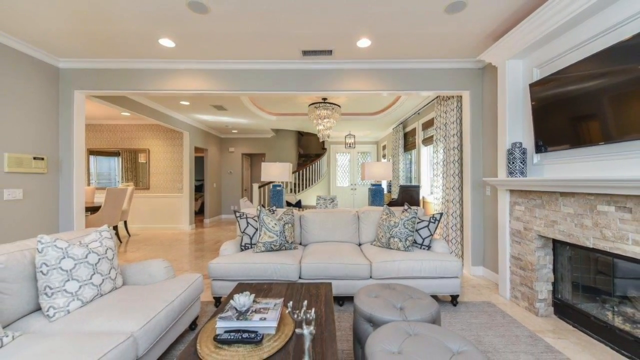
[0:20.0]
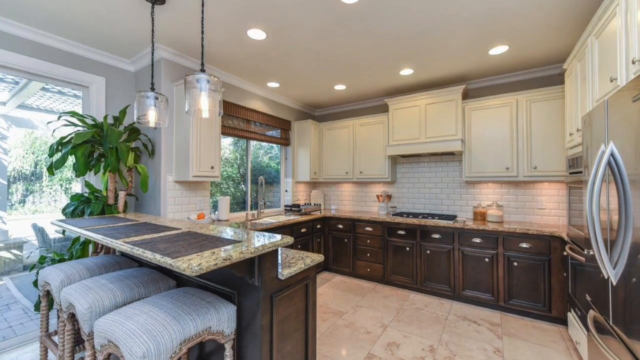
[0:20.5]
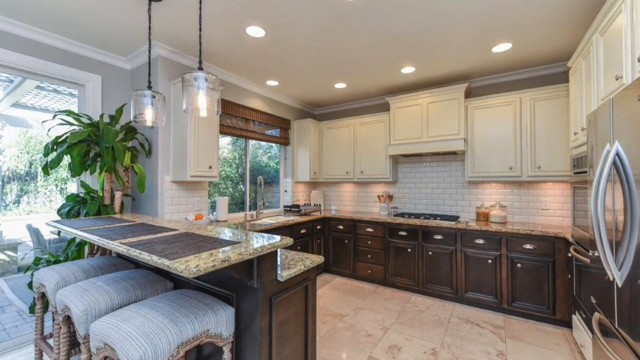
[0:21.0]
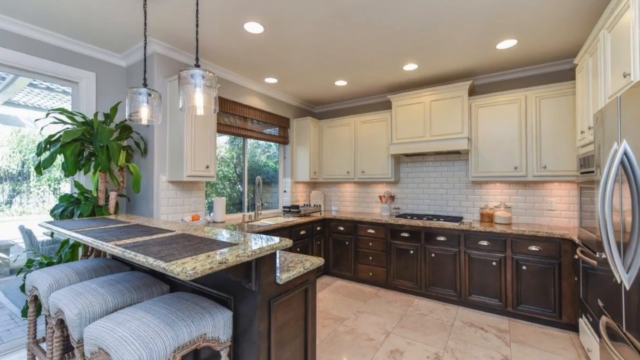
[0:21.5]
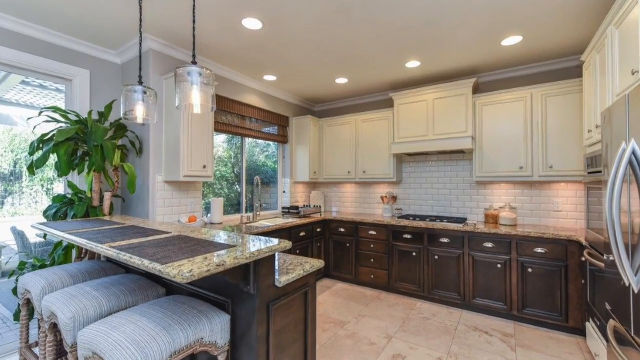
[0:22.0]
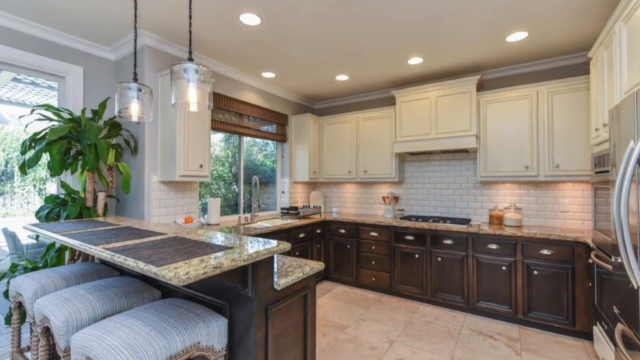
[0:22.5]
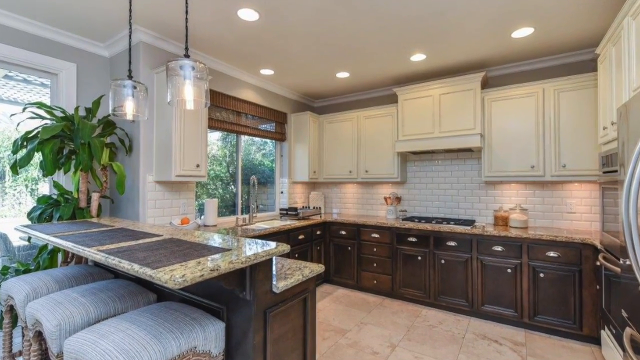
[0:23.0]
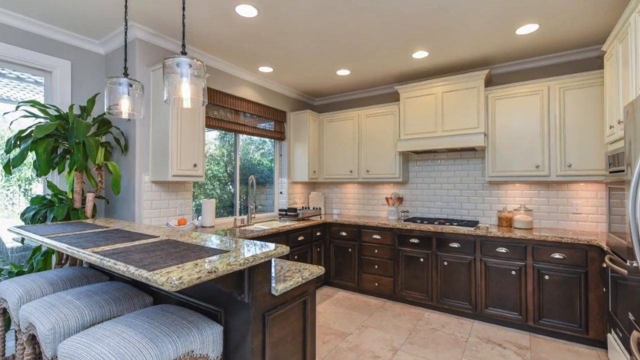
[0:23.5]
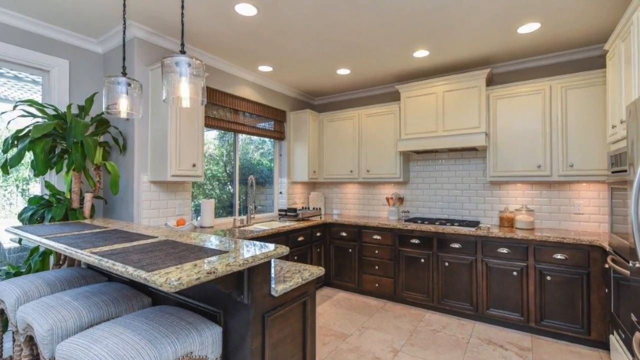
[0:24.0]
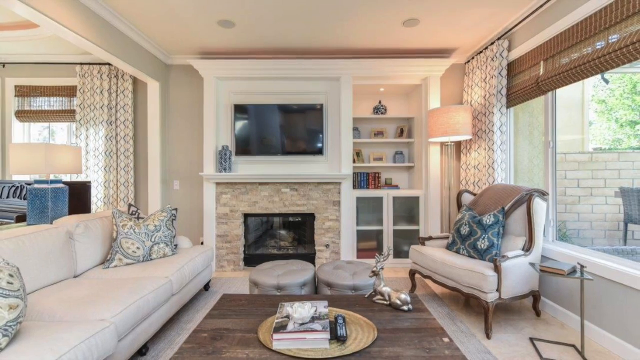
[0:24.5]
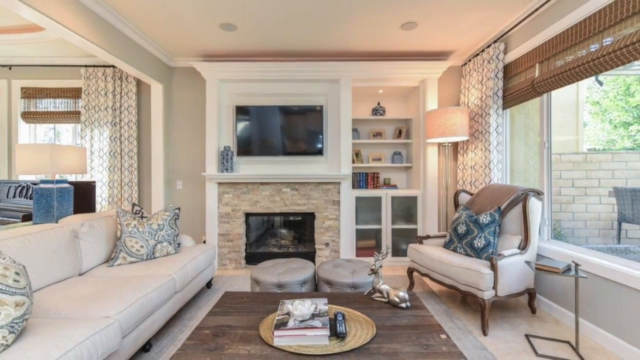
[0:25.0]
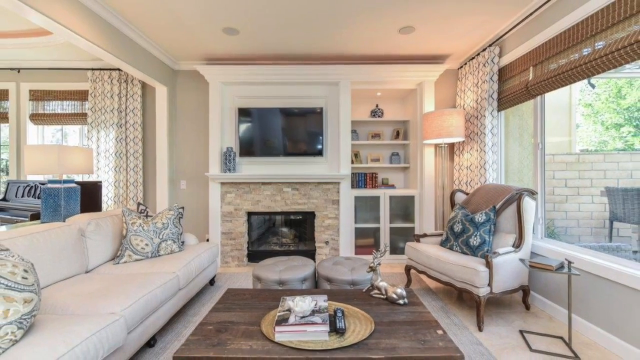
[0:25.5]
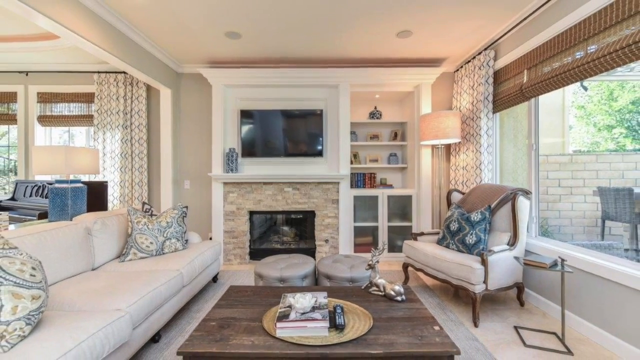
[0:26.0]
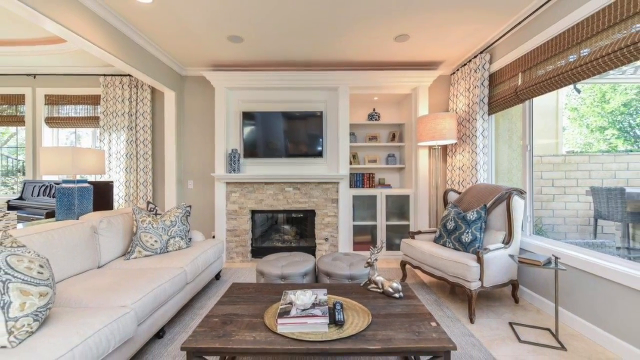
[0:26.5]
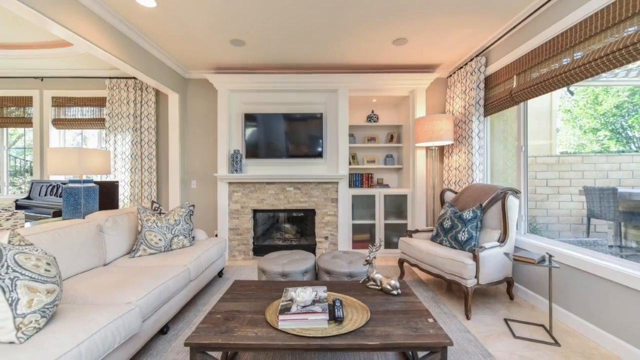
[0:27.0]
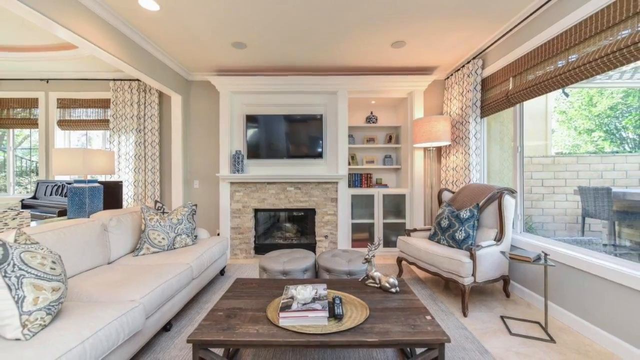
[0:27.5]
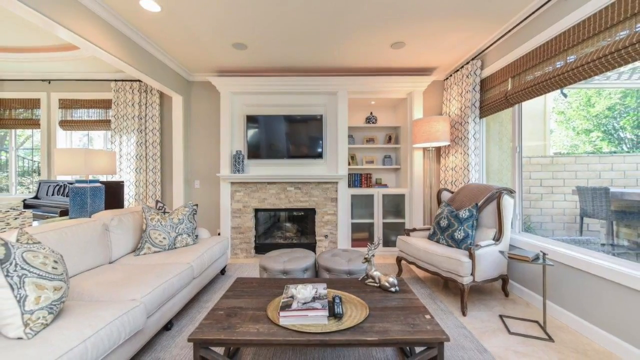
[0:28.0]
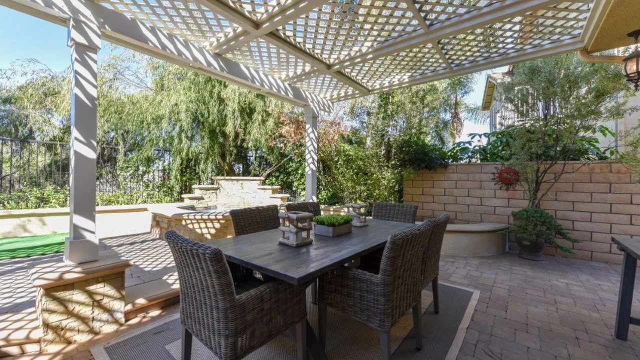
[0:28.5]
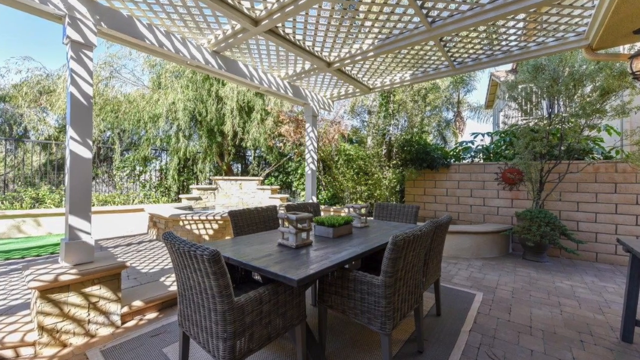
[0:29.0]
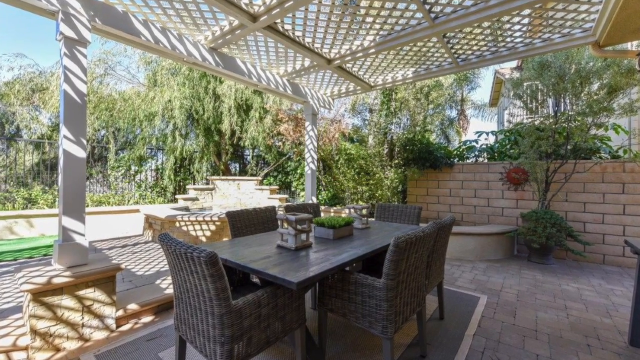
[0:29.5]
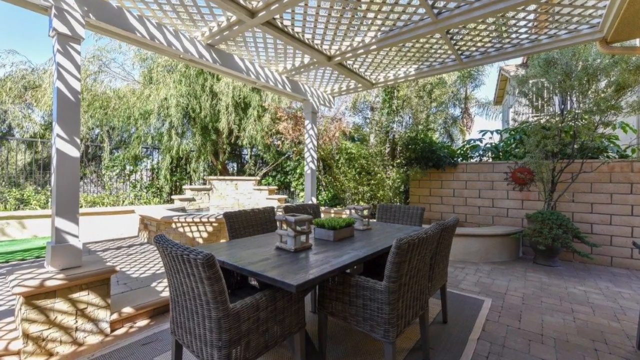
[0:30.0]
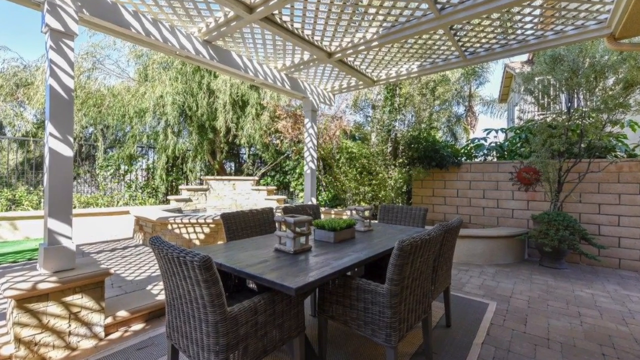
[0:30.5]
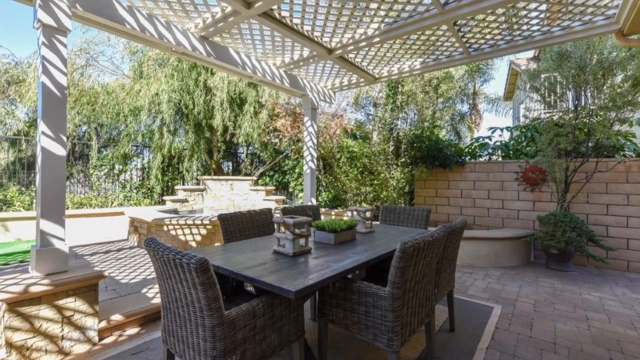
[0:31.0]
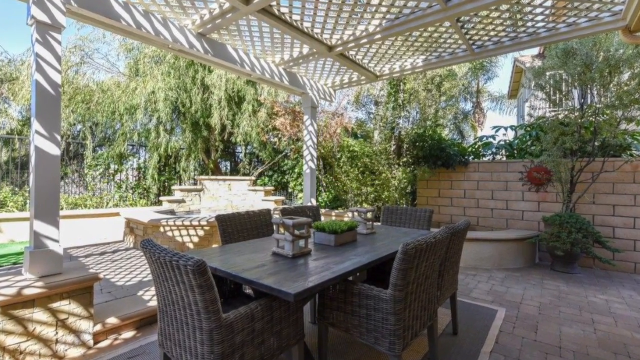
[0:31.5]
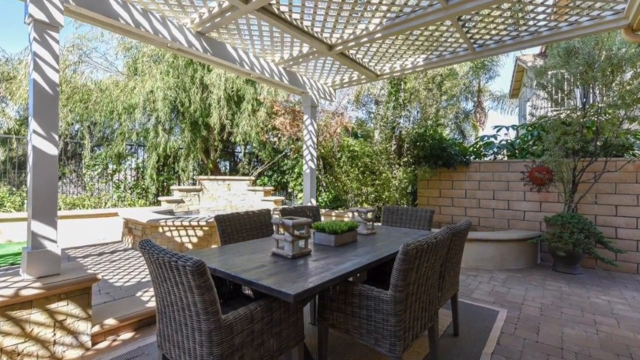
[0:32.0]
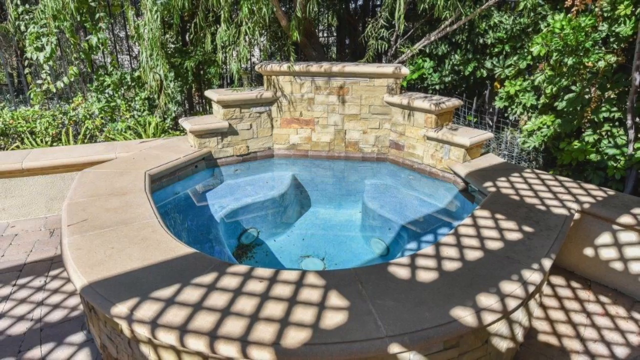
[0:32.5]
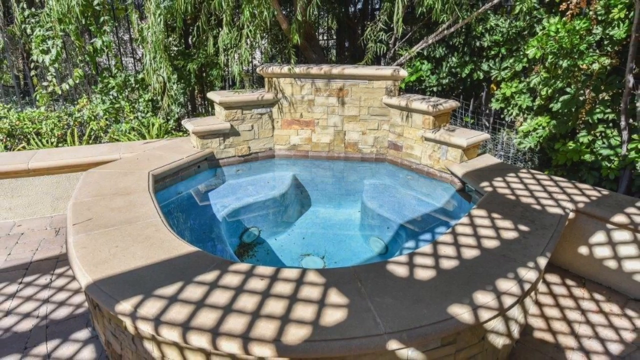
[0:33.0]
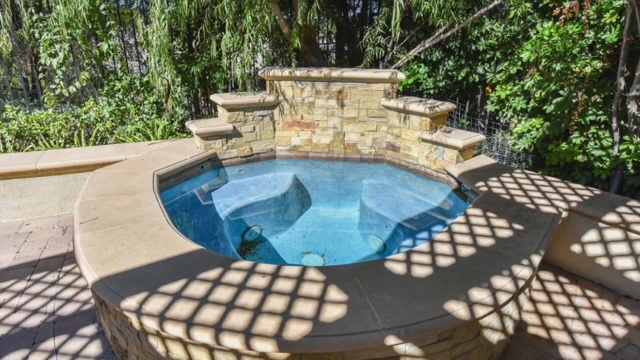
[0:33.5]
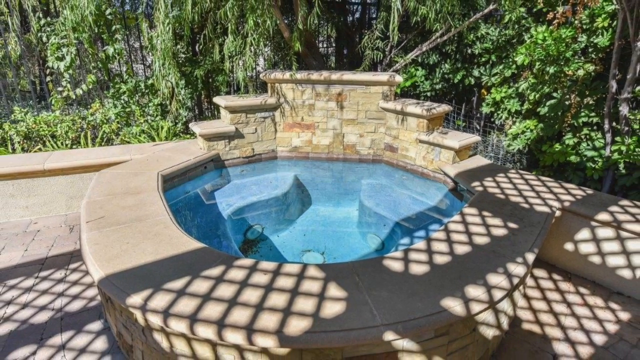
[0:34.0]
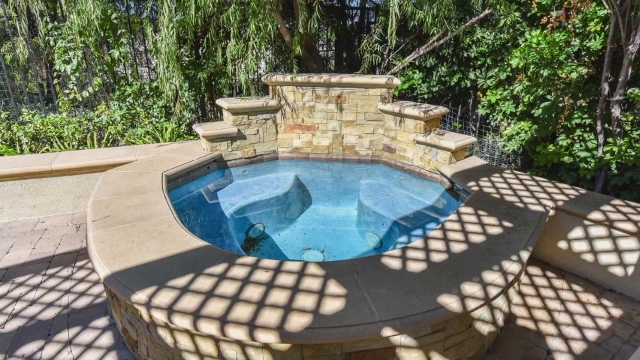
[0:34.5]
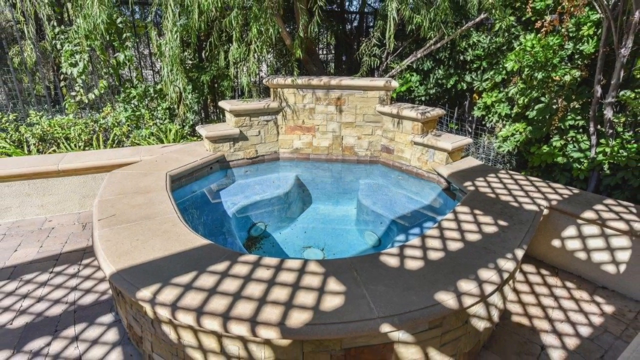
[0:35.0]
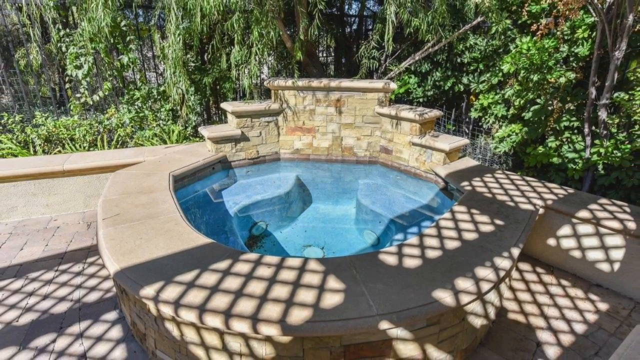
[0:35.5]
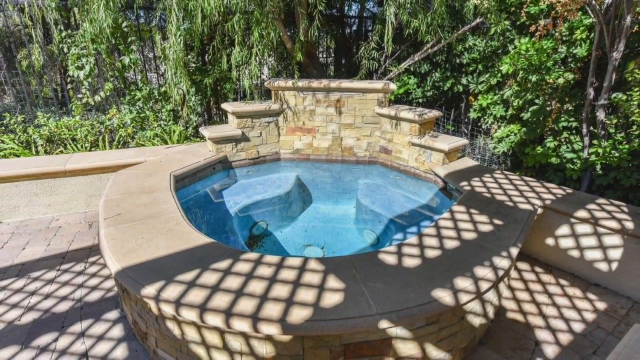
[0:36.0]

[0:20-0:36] A picture of the kitchen opens this part; it does not look as smart as the rest of the house. On the right-hand side is a double-fronted American-style refrigerator, with pale cabinets up high and dark wood effect cabinets down low. A breakfast bar is on the left-hand side with what look like some stools, and there are marble worktops and a marble breakfast bar. Little round lights are set into the ceiling, plus two hanging pendant lamps above the breakfast bar. The video cuts to an alternative shot of the living room, all in pale colours, with big sofas, a chair, a couple of pale poufs, an imitation fire in a fireplace, a small TV above that with ornaments, bookshelves on the right-hand side and a standard lamp that is turned on. The ceiling lamps are not on. A big window on the right-hand side lets in quite a lot of subdued daylight. The next shot shows the patio with an outdoor dining area for six people, a white pergola with white latticework, a yellow brick wall, quite exotic lush planting and paving on the ground. The final shot shows a built-in blue Jacuzzi, or whirlpool, bath set in yellow stone with a curved bench around the front and lots of debris in the pool. There is a slow pull-out on that shot.